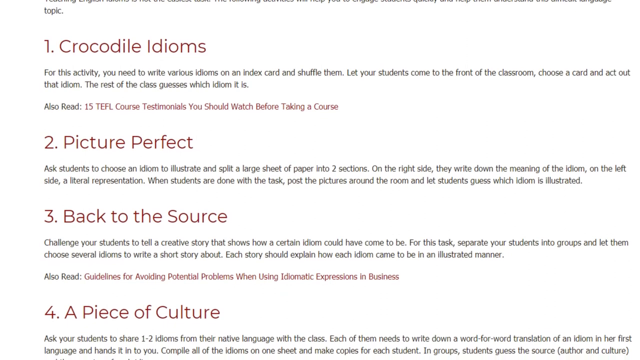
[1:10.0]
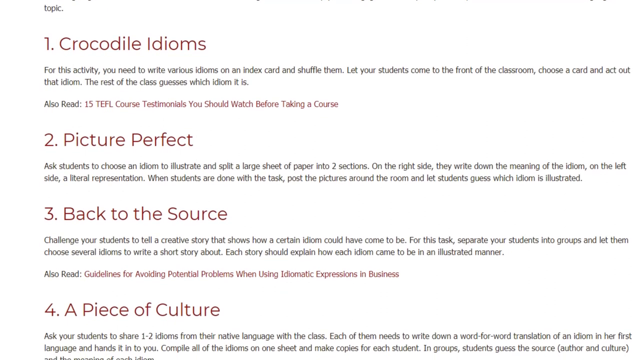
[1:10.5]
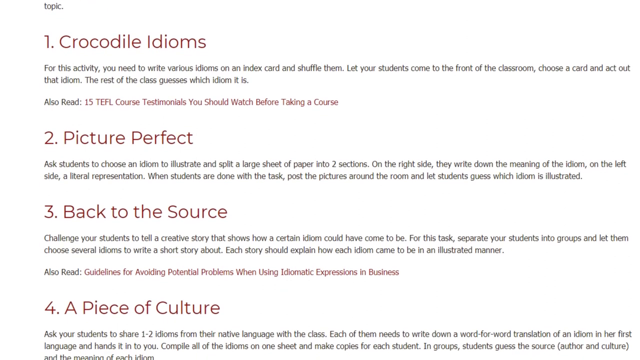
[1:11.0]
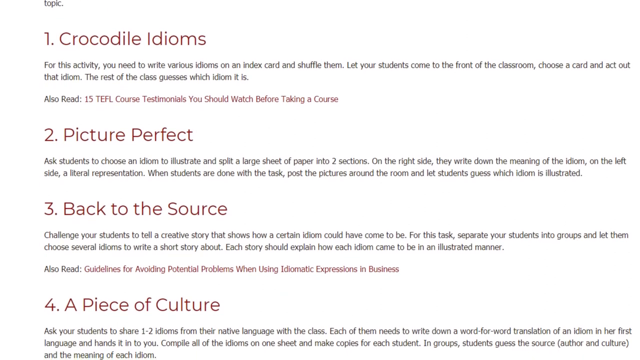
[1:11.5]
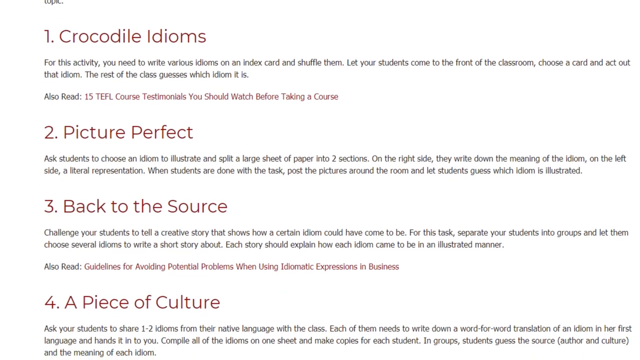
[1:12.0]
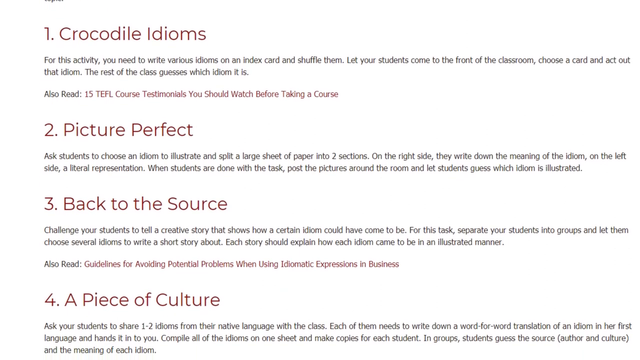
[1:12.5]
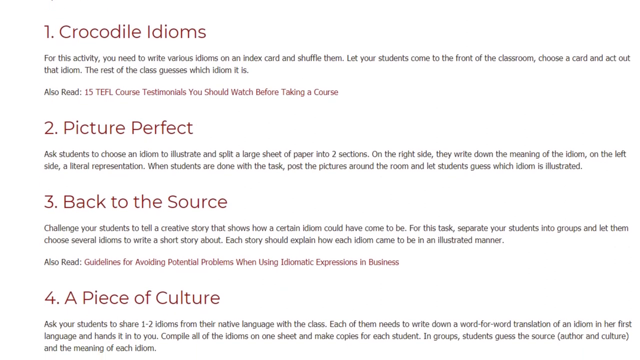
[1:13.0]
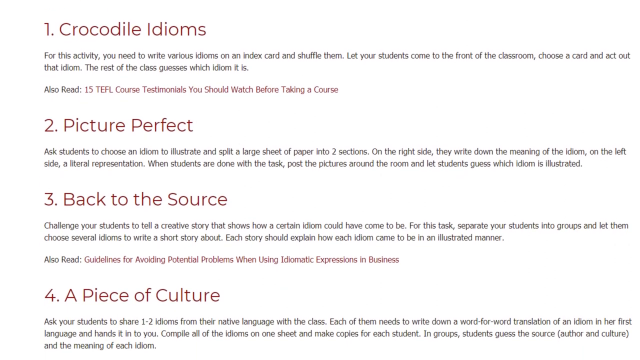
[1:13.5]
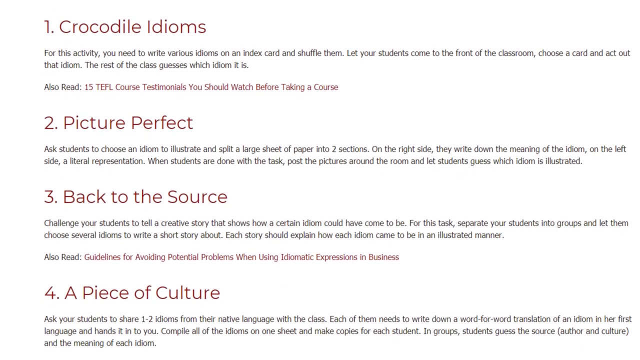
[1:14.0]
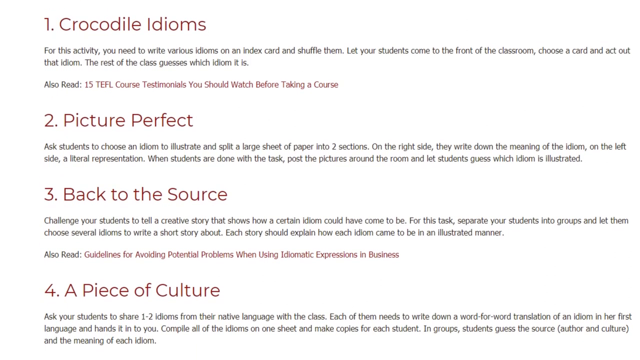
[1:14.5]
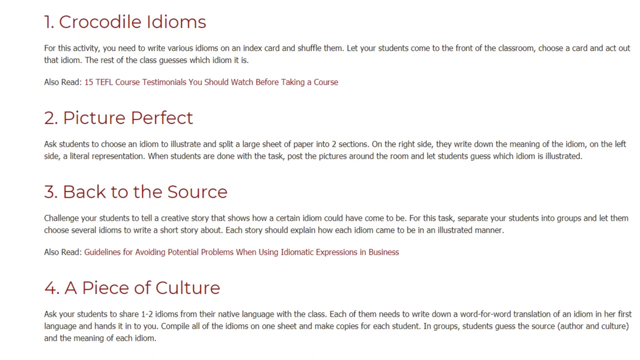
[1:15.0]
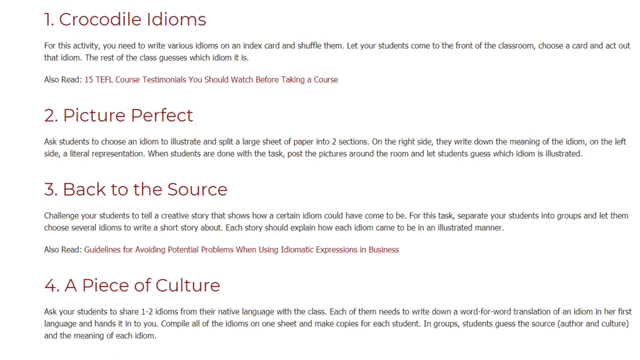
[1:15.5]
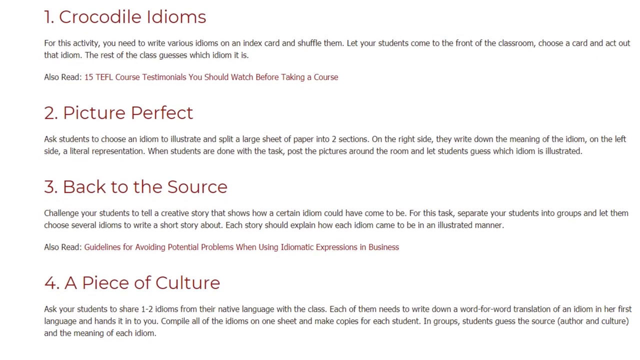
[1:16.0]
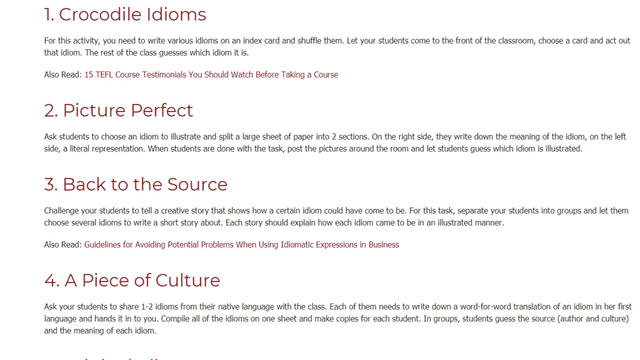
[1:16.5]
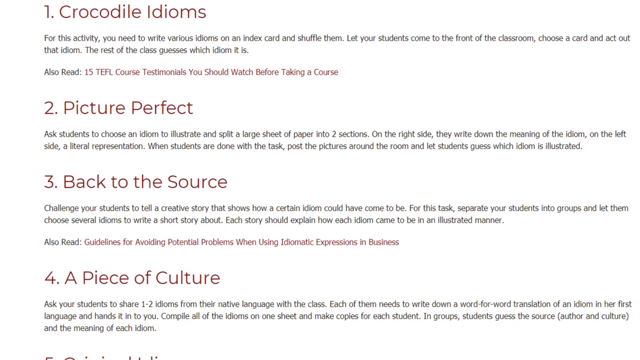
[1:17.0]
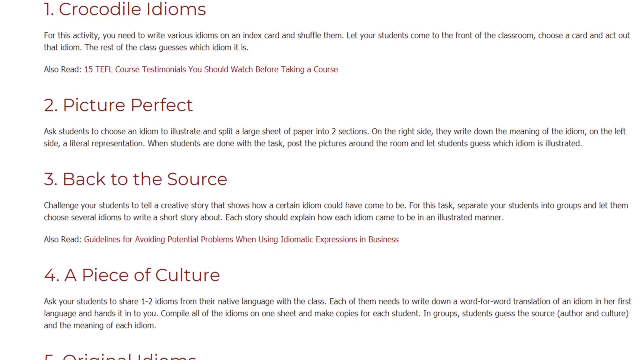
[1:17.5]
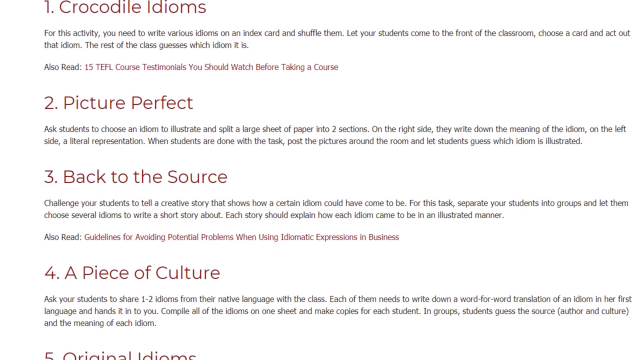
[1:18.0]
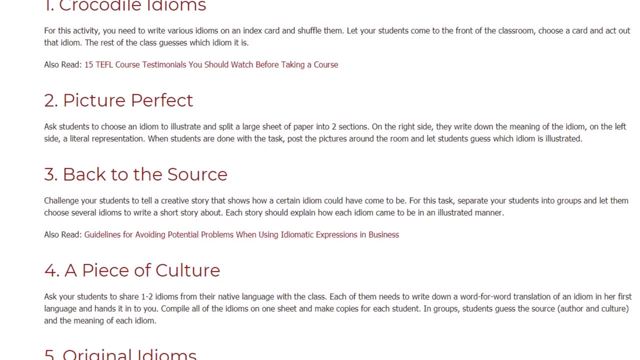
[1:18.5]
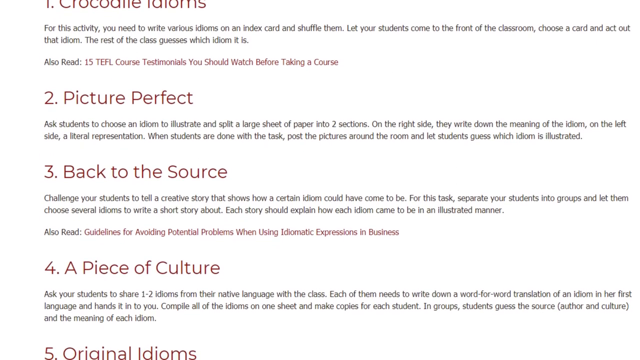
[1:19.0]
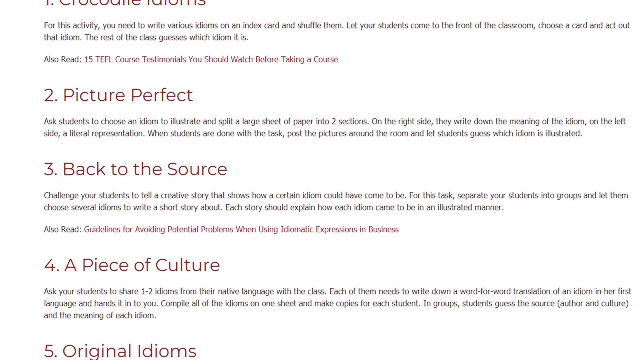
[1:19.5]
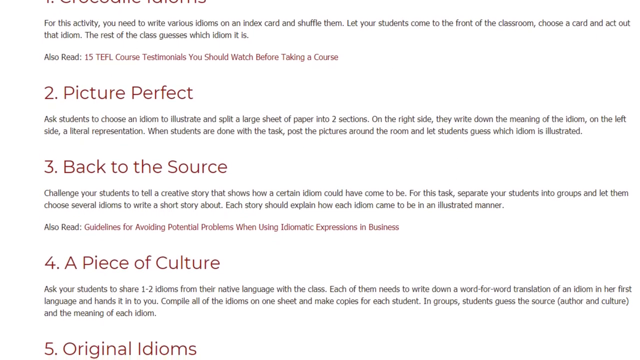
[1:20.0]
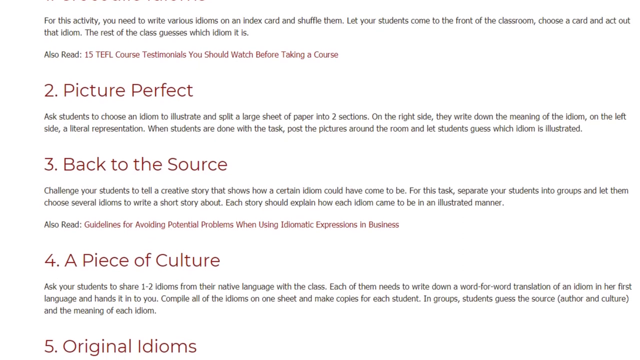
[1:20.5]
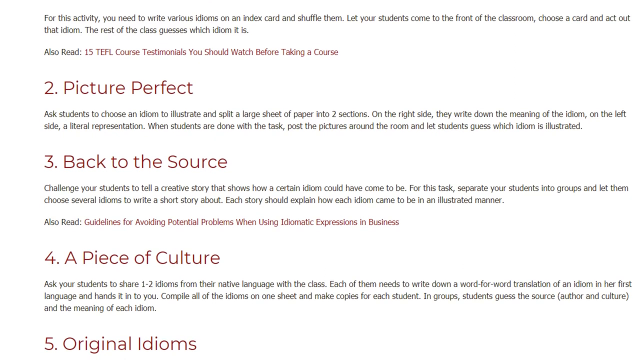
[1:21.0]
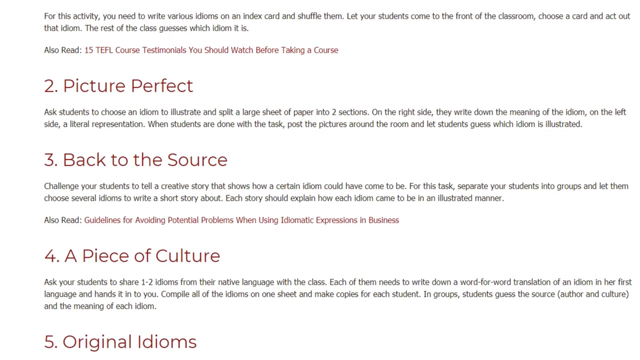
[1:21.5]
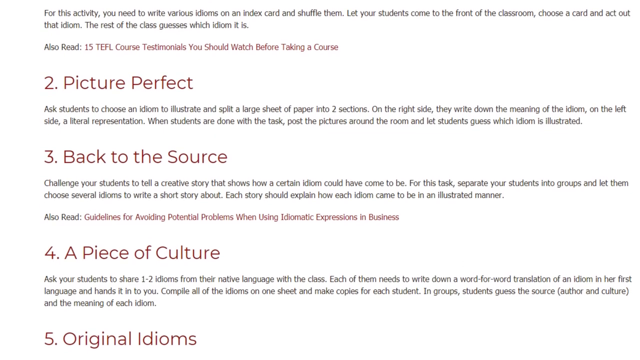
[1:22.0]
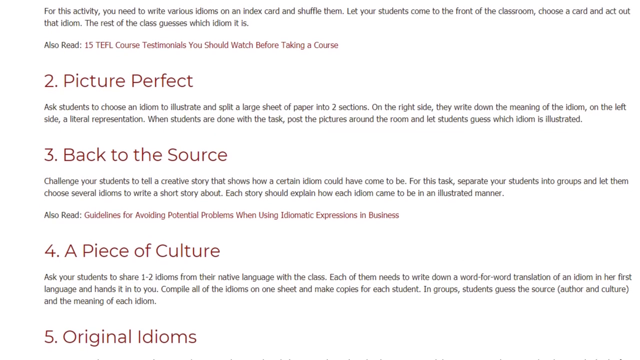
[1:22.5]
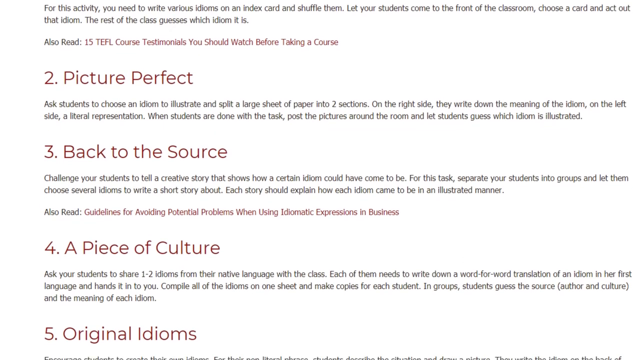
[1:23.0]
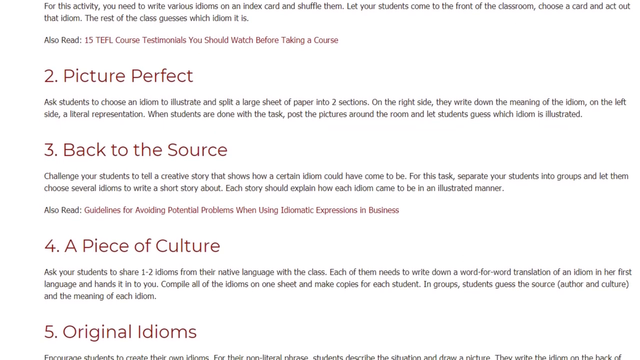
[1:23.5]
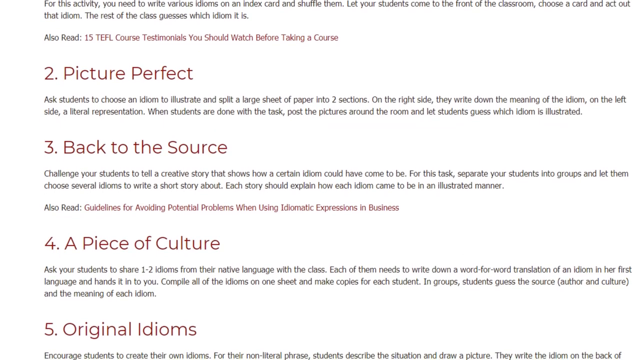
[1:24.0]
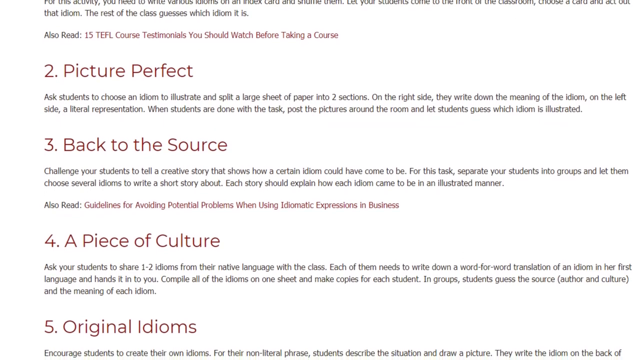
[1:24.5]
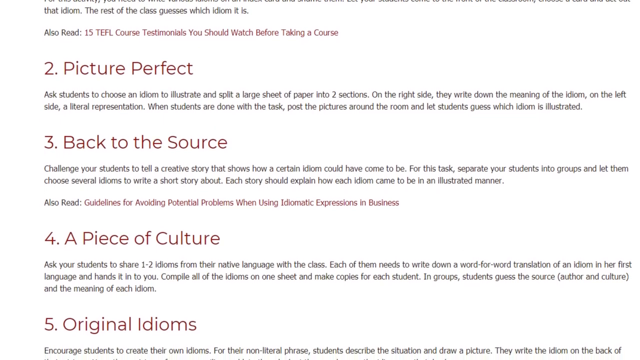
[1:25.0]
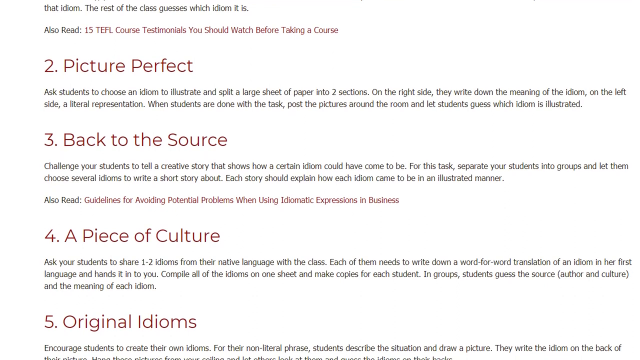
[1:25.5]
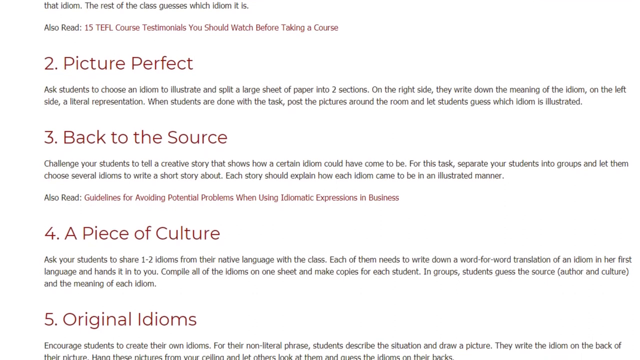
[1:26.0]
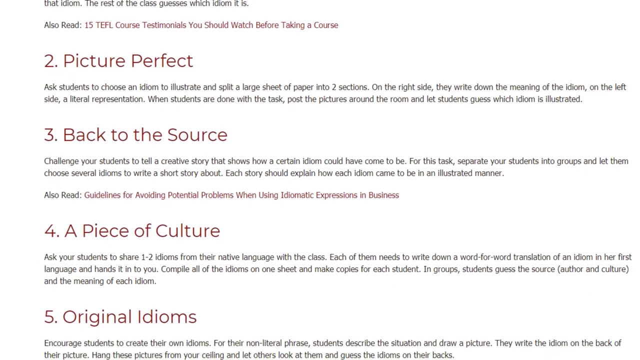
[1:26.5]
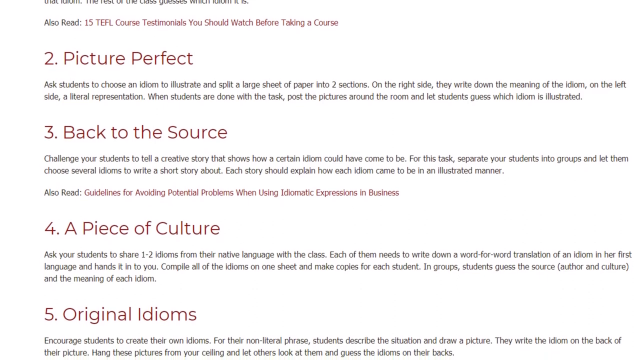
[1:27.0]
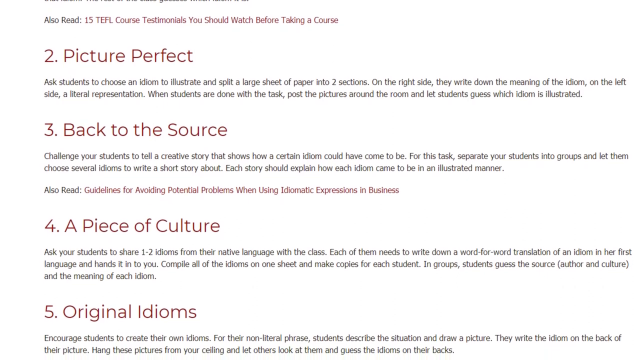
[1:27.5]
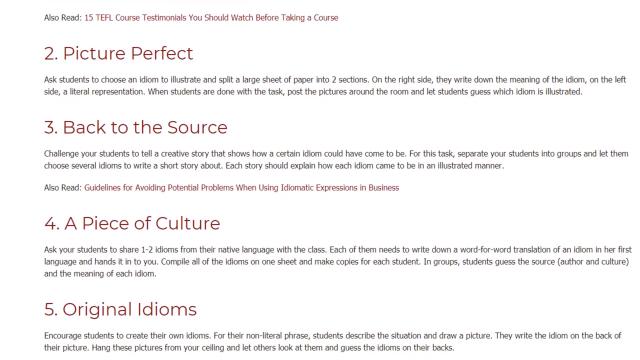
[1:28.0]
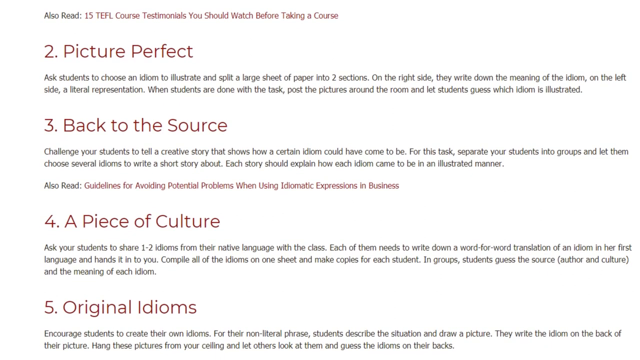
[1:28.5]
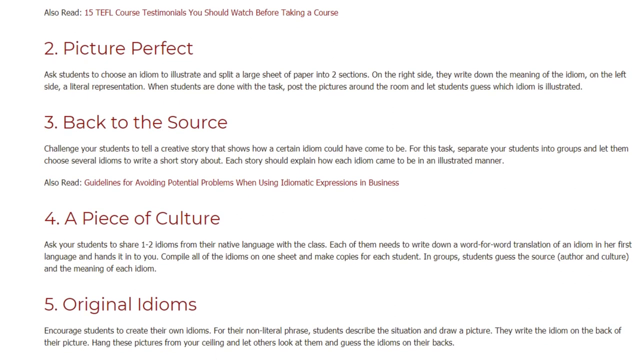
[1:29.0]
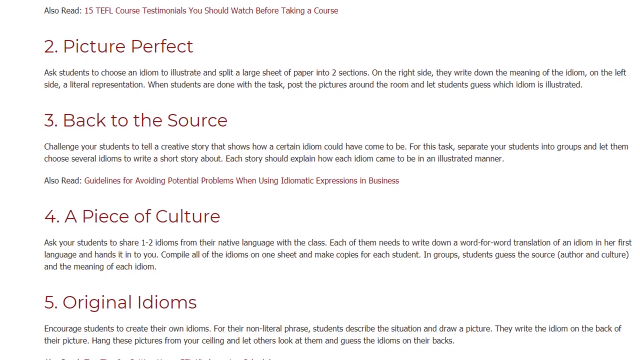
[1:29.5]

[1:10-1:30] The video demonstrates how to teach idioms, showing strategies 1, 2, 3 and 4 as the screen slowly moves down the page. Strategy 1 is "crocodile idioms," with the text: "For this activity you need to write down various idioms on an index card and shuffle them, let your students come to the front of the classroom, choose a card, and act out that idiom. The rest of the class guesses which idiom it is." Number two is "picture perfect," with the text: "Ask students to choose an idiom to illustrate and split a large sheet of paper into two sections. On the right side they write down the meaning of the idiom, on the left side a literal representation. When students are done with the task, post the pictures around the room and let students guess which idiom is illustrated." The third is "back to the source," with the text: "Challenge your students to tell a creative story that shows how a certain idiom could have come to be. For this task, separate your students into groups and let them choose several idioms to write a short story about. Each story should explain how that idiom came to be in an illustrated manner." The fourth strategy is "a piece of culture," described as: "Ask your students to share one to two idioms from their native language with the class. Each of them needs to write down a word-for-word translation of an idiom in their first language and hands it in to you. Compile all the idioms on one sheet and make copies for each student. In groups students guess the source, the author and culture, and the meaning of each idiom." Number five comes next: "original idioms."